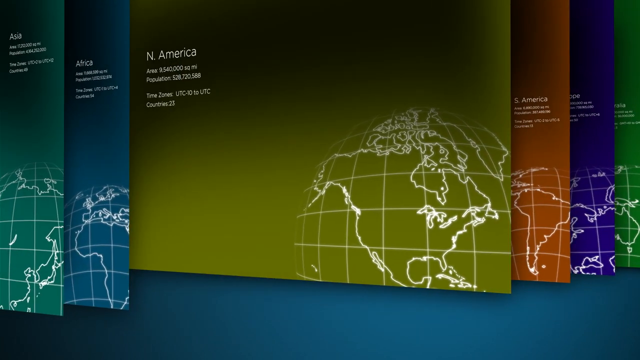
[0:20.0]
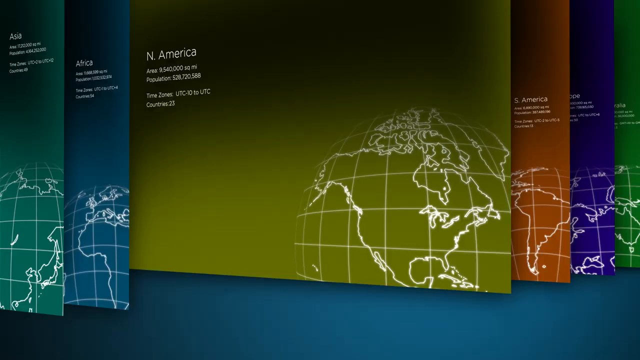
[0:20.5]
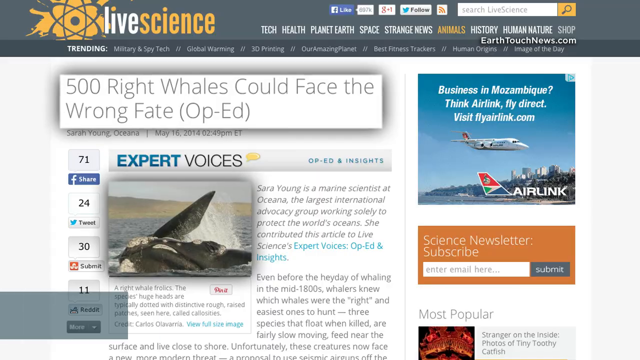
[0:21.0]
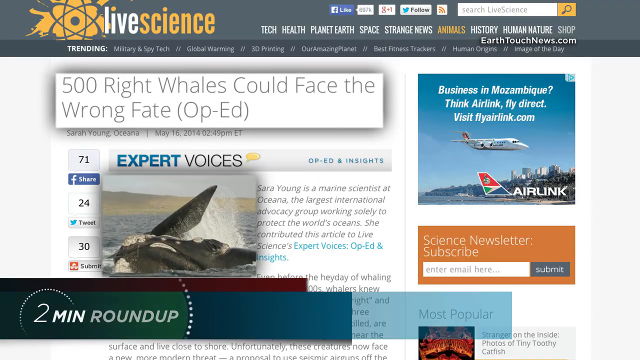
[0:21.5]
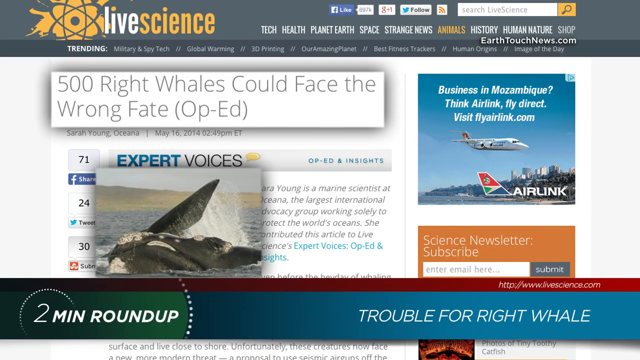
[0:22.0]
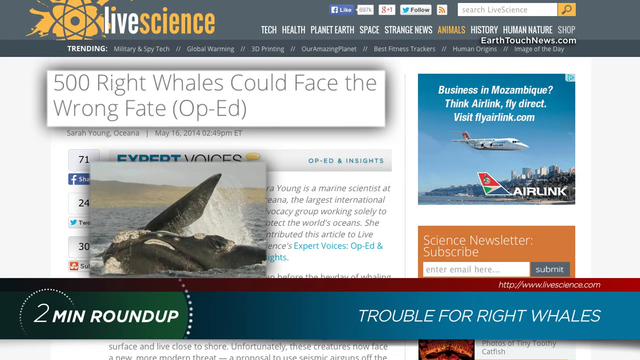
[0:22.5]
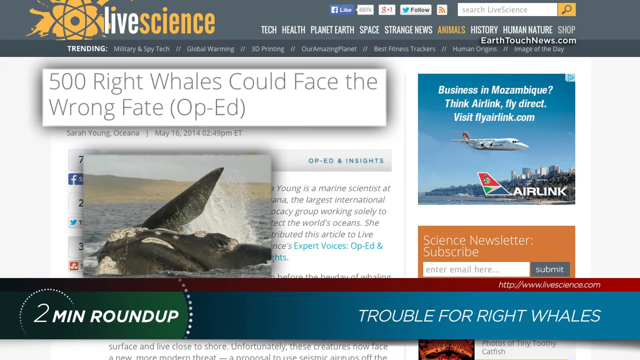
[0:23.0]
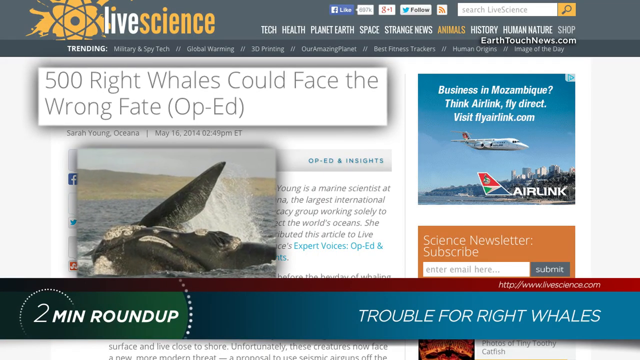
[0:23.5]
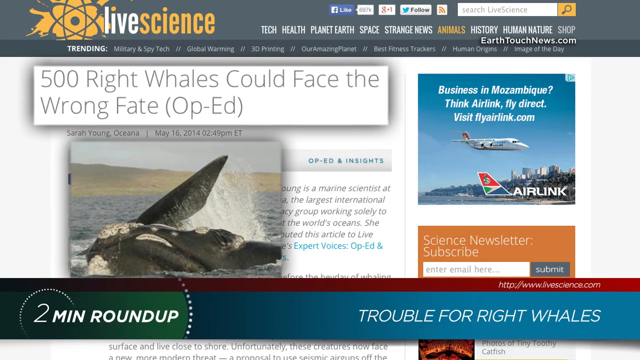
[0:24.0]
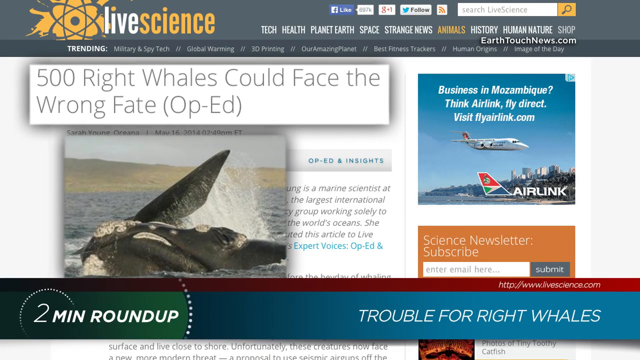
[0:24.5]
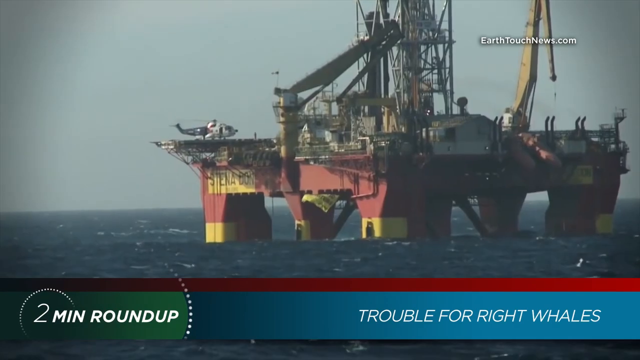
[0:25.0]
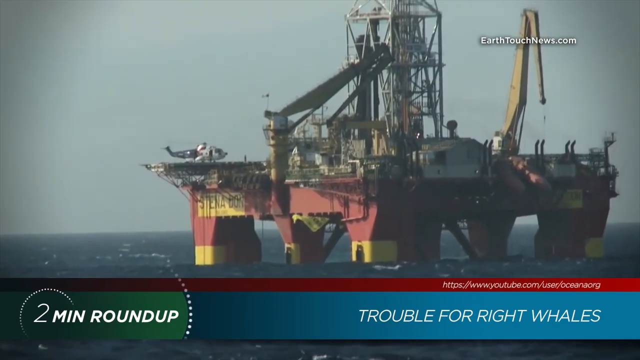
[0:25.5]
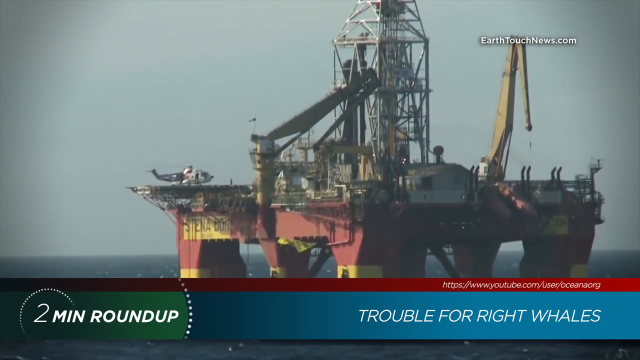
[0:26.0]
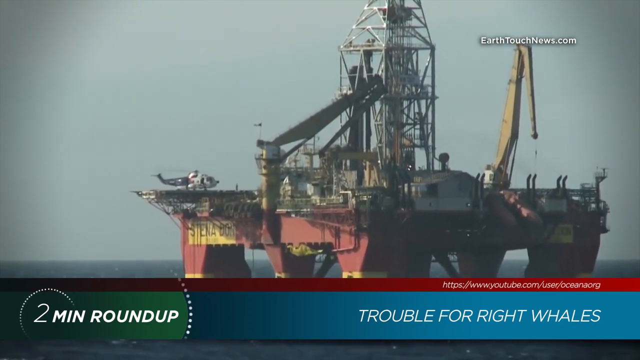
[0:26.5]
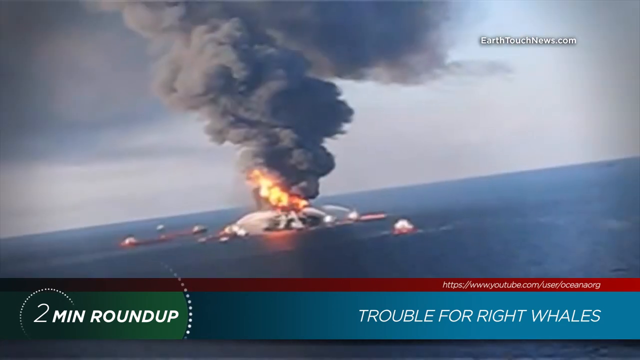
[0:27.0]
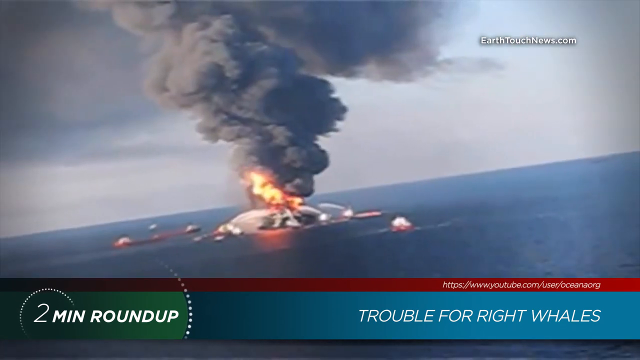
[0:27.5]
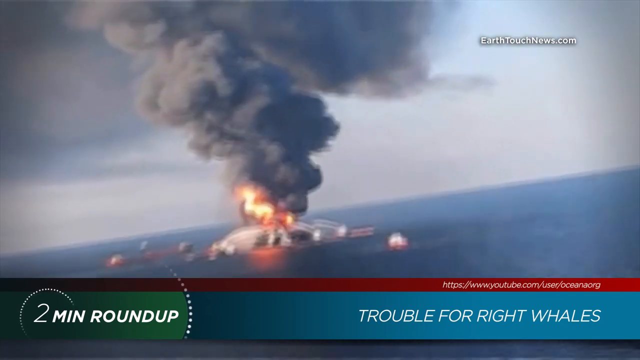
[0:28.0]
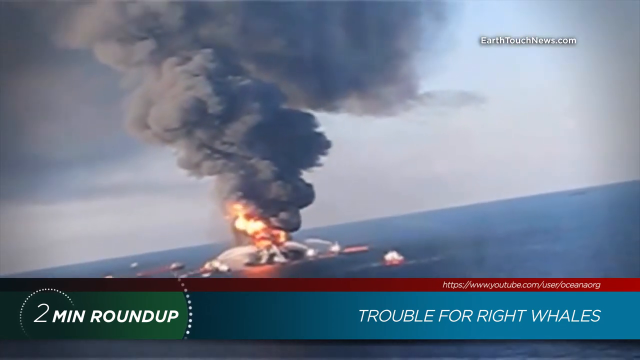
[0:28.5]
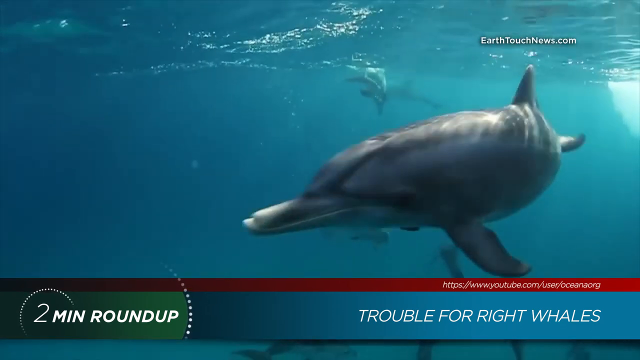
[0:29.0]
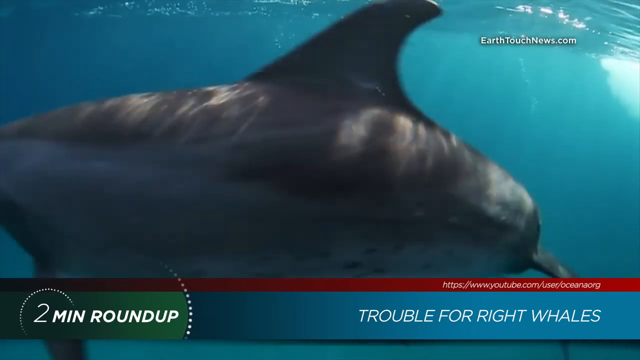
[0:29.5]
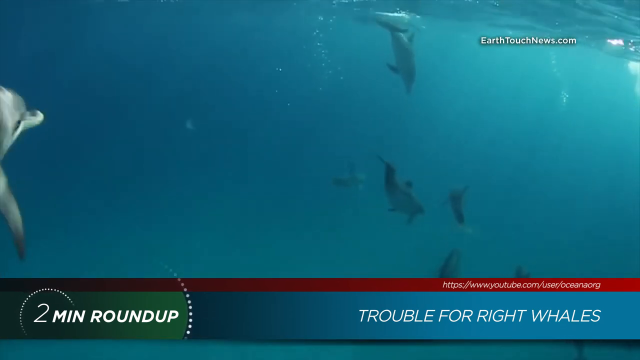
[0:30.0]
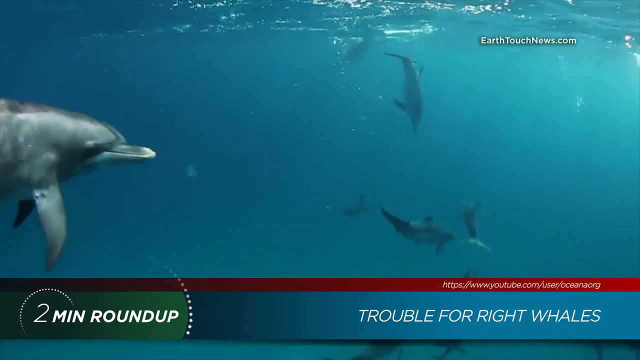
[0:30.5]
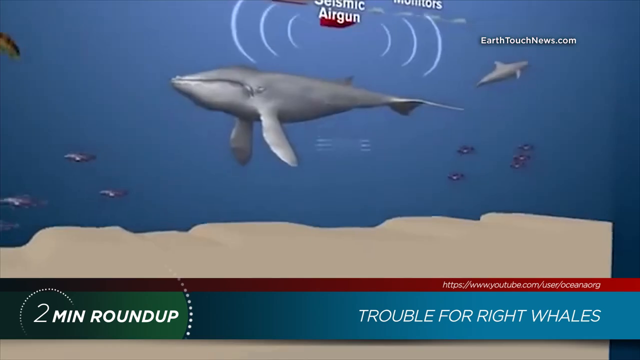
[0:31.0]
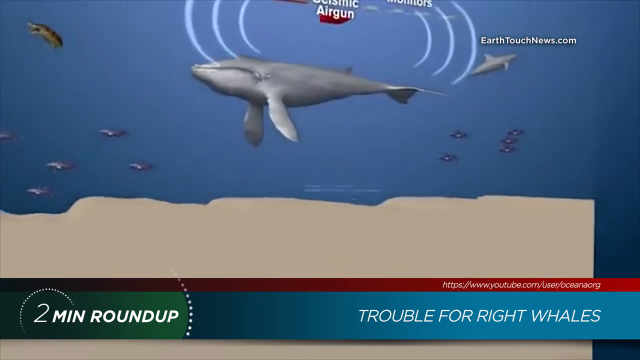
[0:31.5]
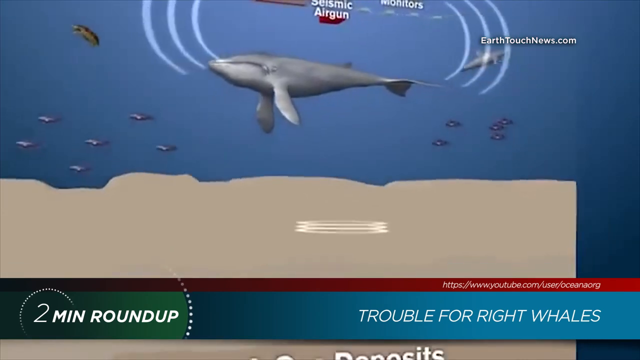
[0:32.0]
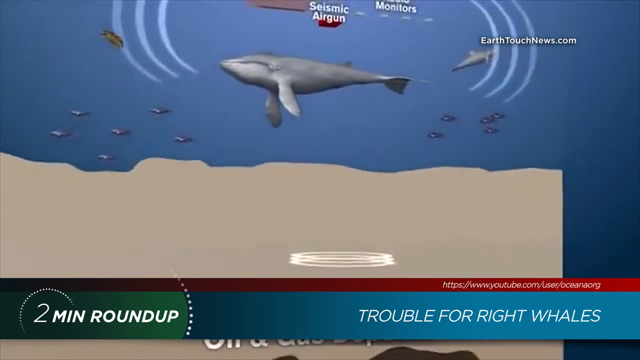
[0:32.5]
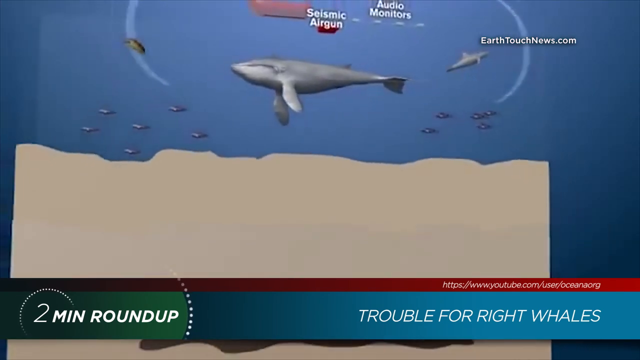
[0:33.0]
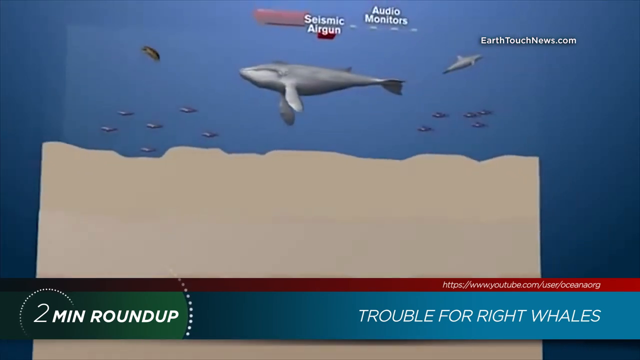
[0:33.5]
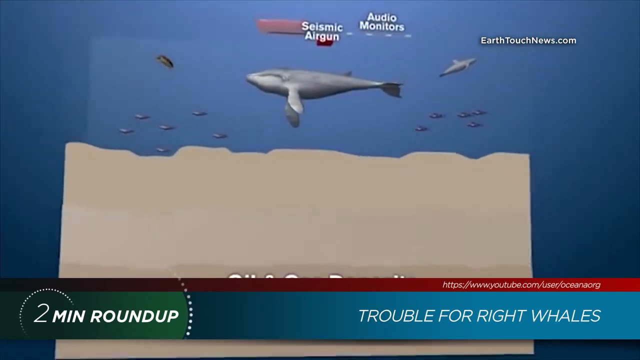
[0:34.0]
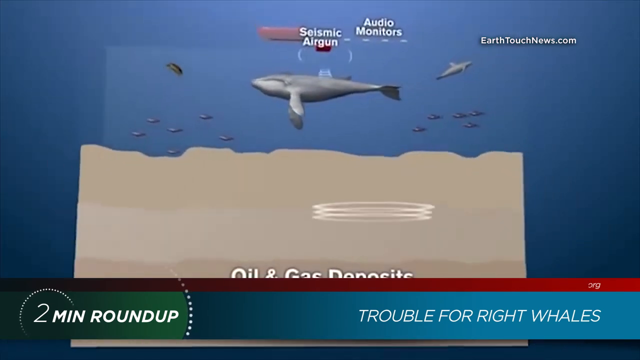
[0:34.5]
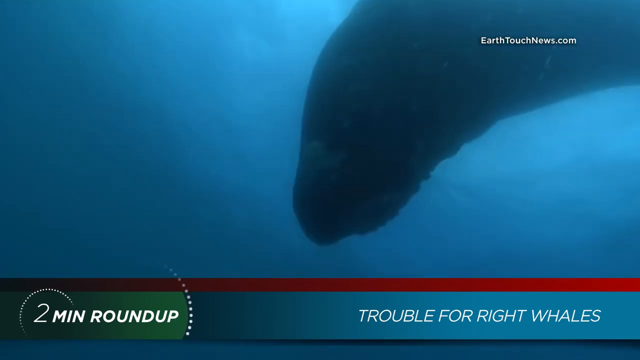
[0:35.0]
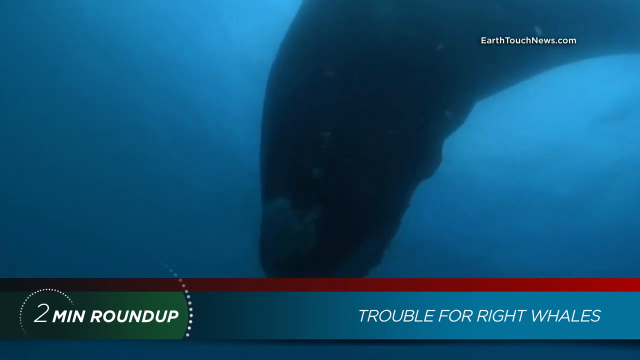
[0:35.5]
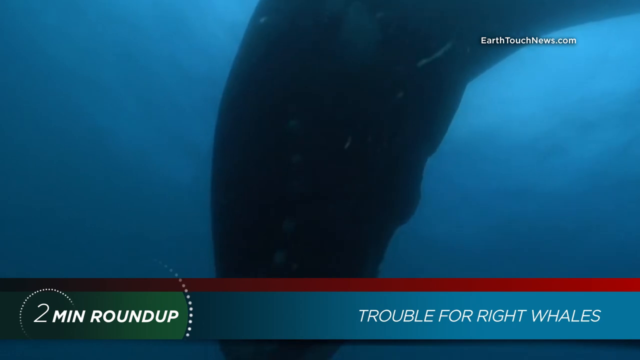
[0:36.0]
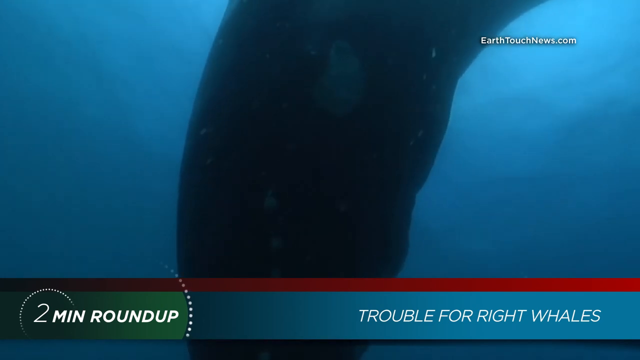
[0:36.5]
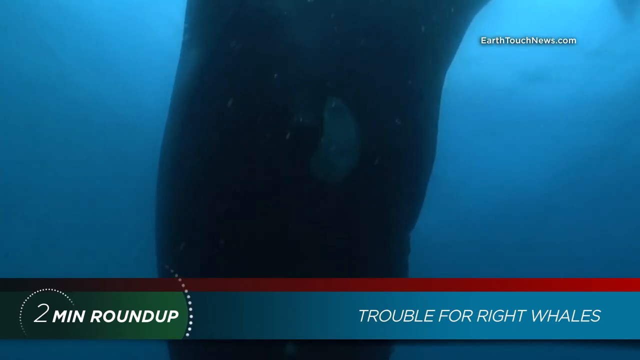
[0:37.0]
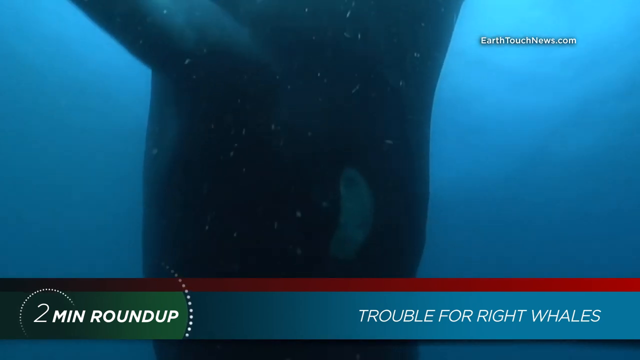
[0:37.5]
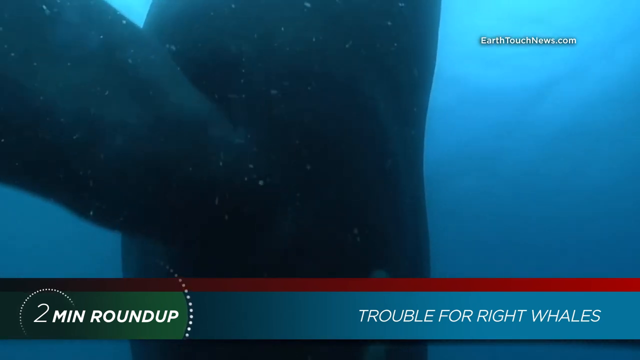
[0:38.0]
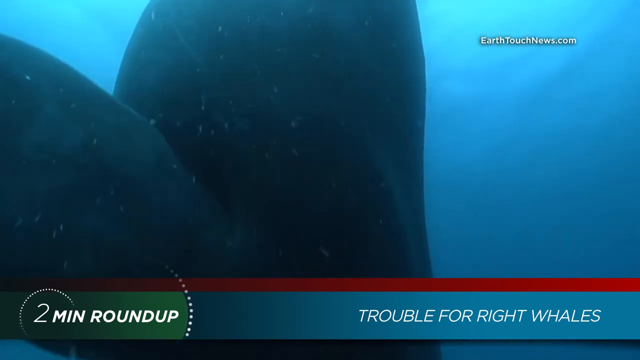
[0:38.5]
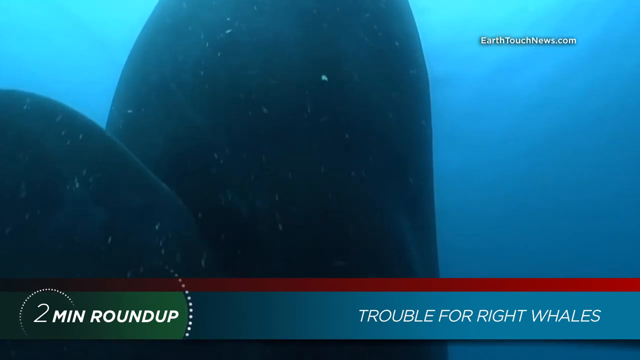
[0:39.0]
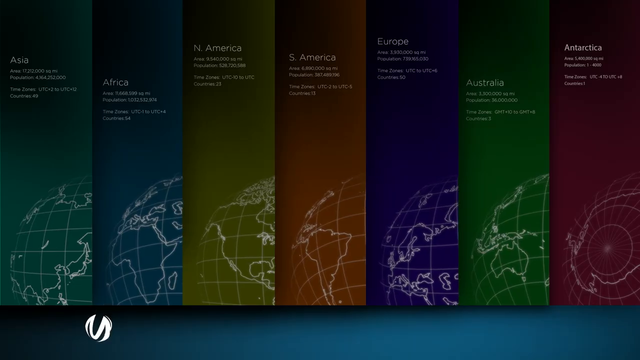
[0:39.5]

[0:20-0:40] The view focuses on the image of North America, then moves to an article on the Live Science website with the headline "500 Right Whales Could Face the Wrong Fate, op-ed." The picture of the whale is taken out of the article and zoomed in on. What appears to be a factory in the middle of the ocean follows, almost as if it is floating on the water. Another video shows what appears to be one of those factories on fire, with large flames rising and smoke going up into the sky. The video then cuts to a group of dolphins swimming together in the ocean, followed by an animated ocean picture with a whale, a dolphin, and fish, and then whales in the ocean.